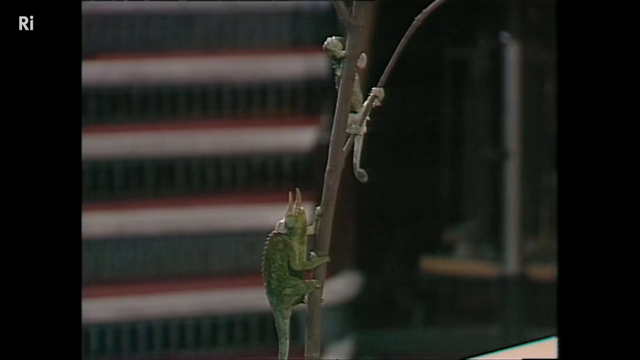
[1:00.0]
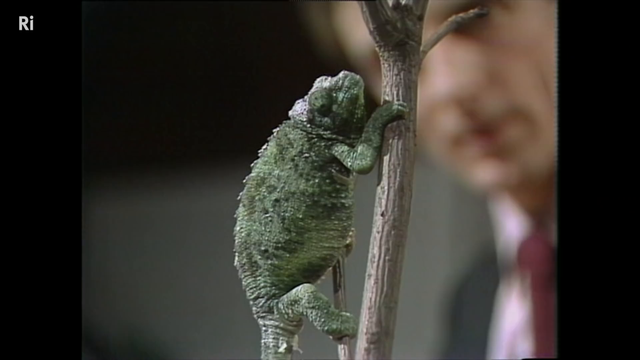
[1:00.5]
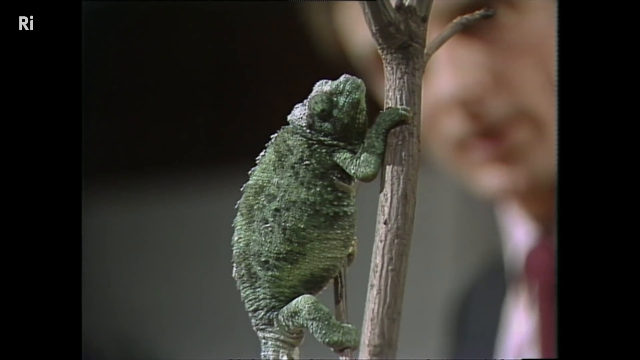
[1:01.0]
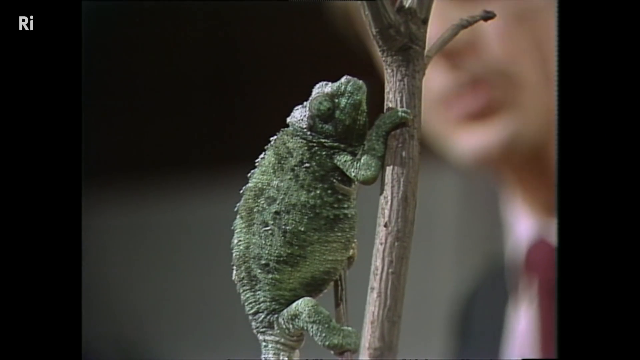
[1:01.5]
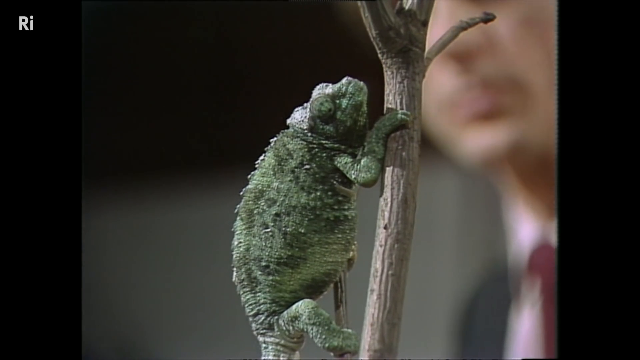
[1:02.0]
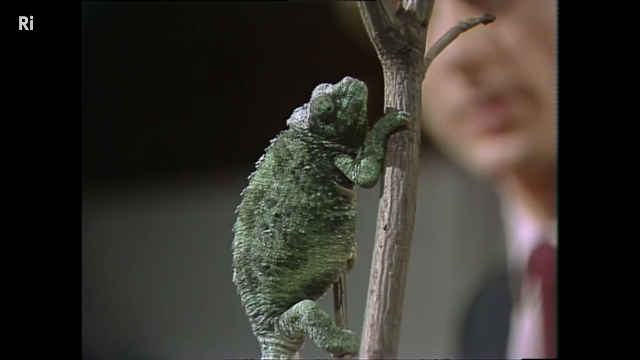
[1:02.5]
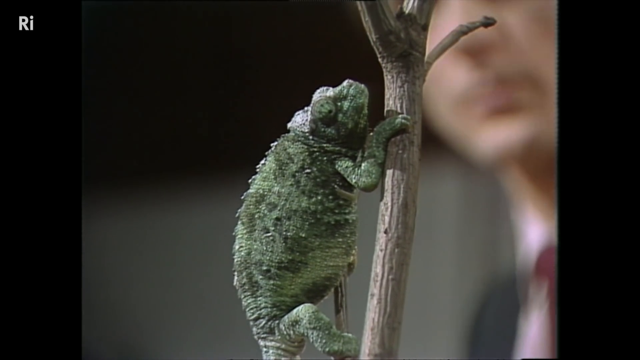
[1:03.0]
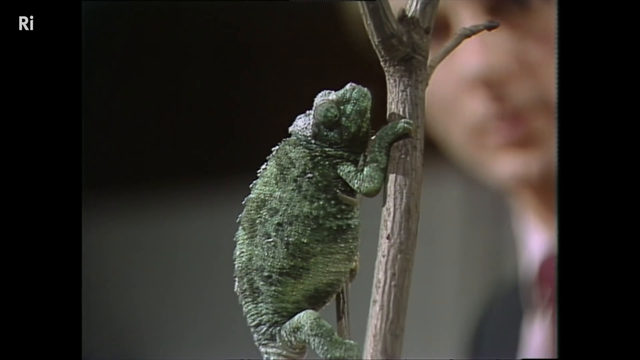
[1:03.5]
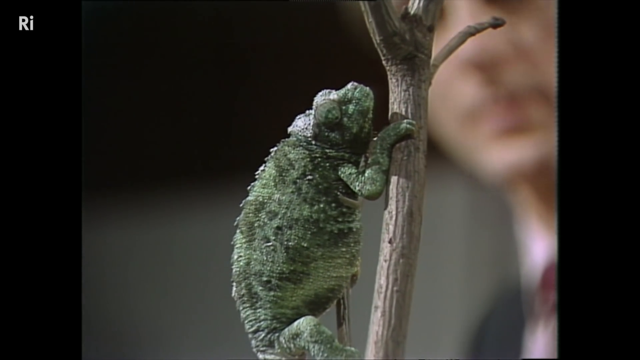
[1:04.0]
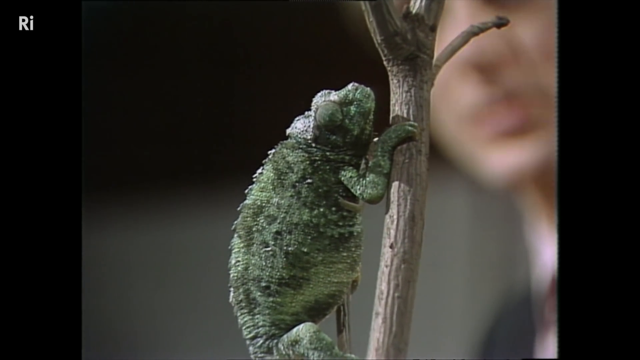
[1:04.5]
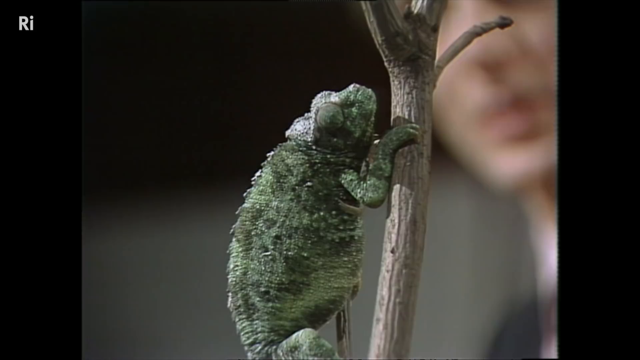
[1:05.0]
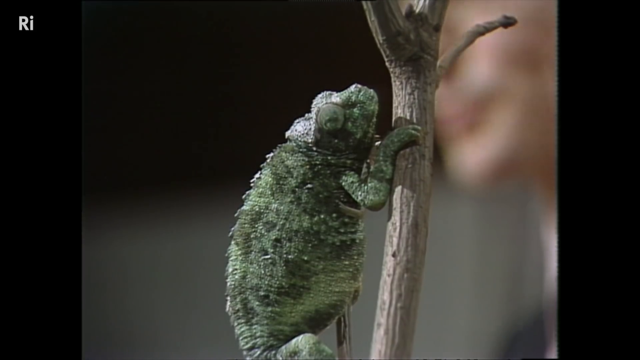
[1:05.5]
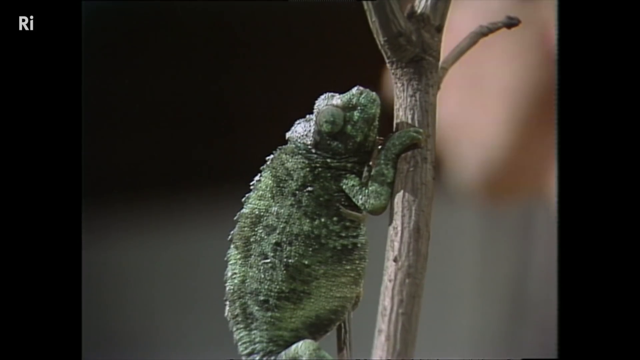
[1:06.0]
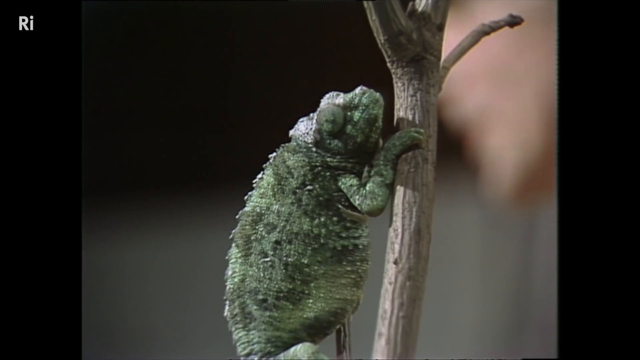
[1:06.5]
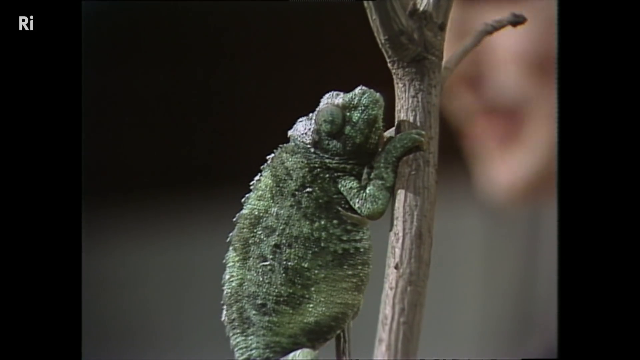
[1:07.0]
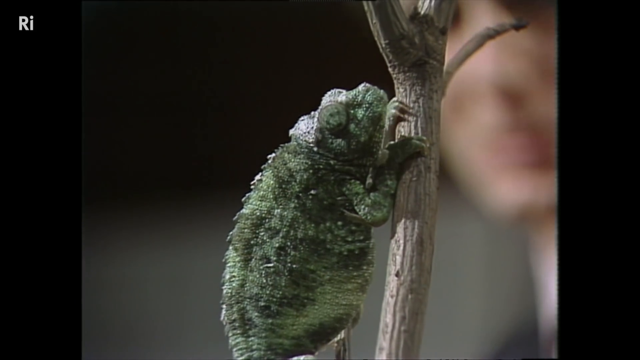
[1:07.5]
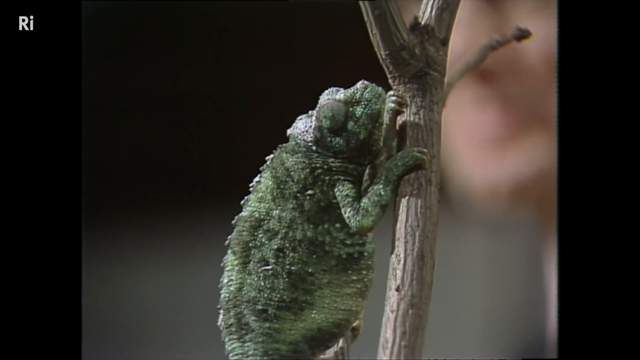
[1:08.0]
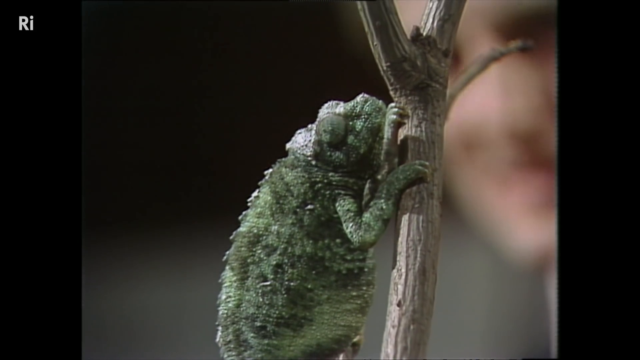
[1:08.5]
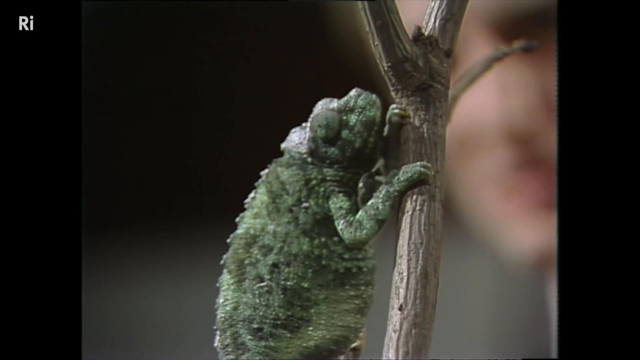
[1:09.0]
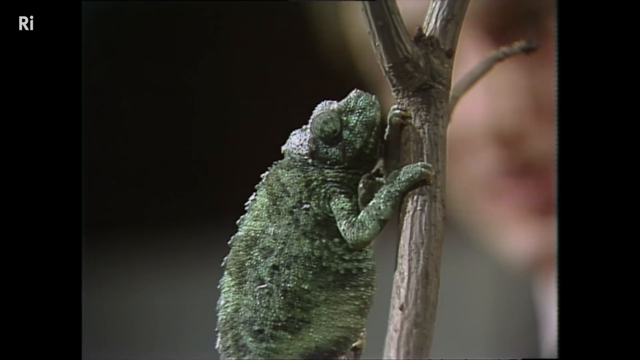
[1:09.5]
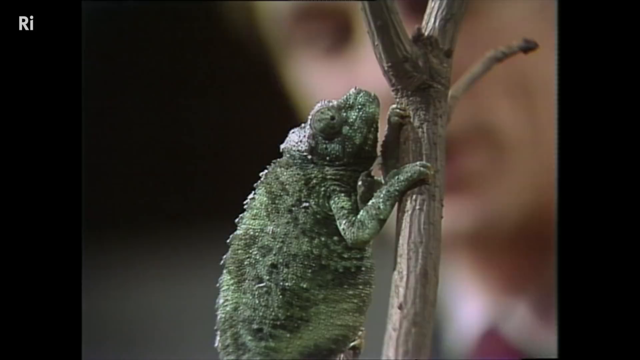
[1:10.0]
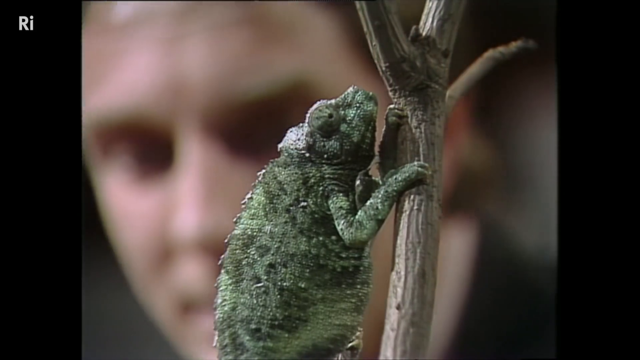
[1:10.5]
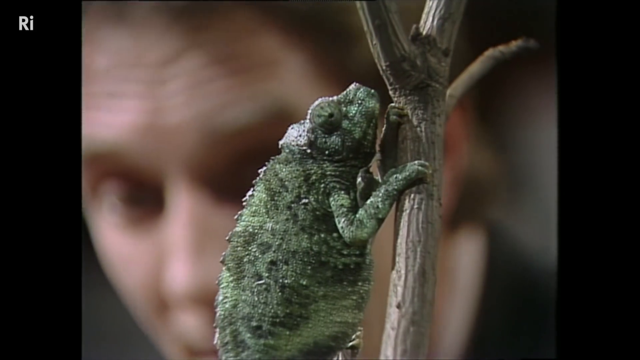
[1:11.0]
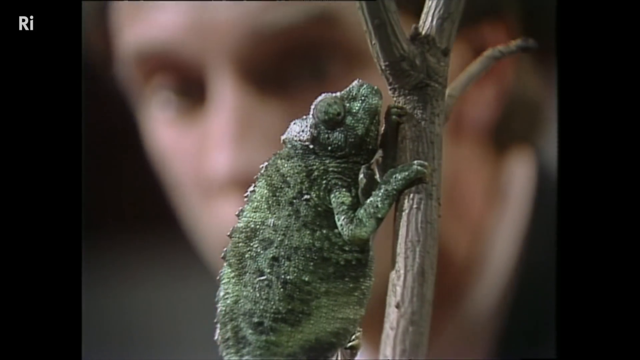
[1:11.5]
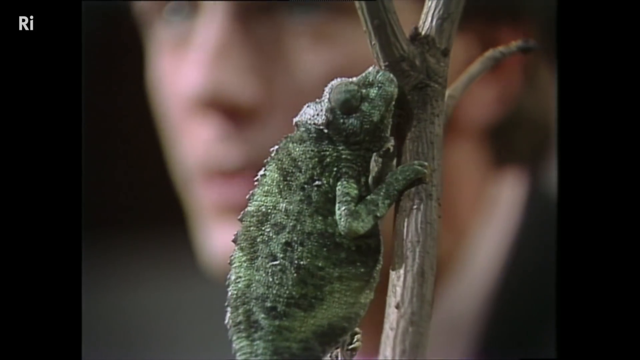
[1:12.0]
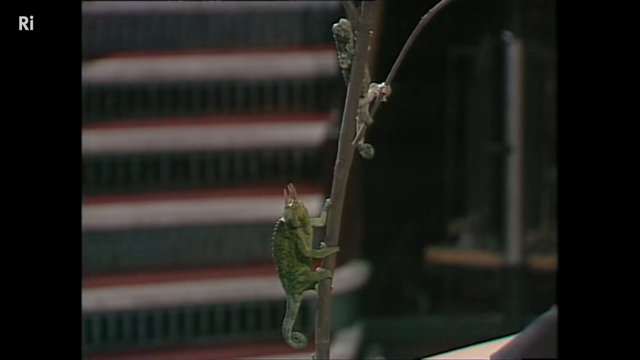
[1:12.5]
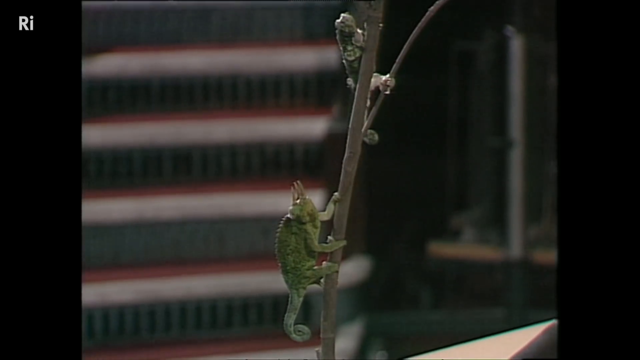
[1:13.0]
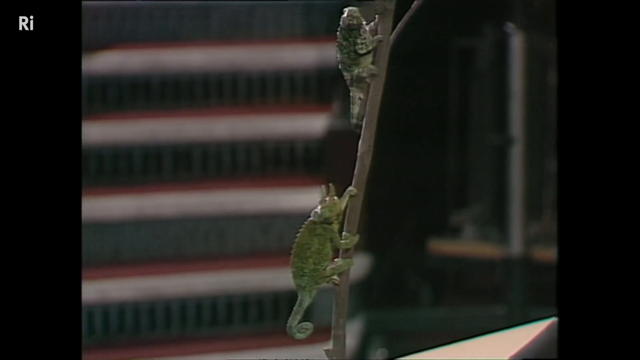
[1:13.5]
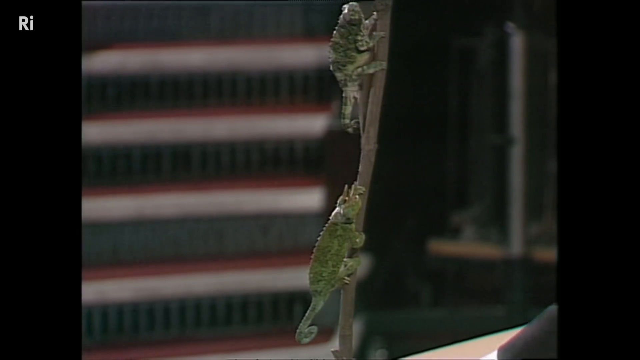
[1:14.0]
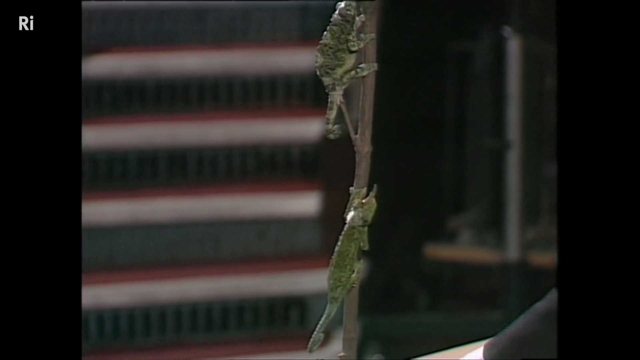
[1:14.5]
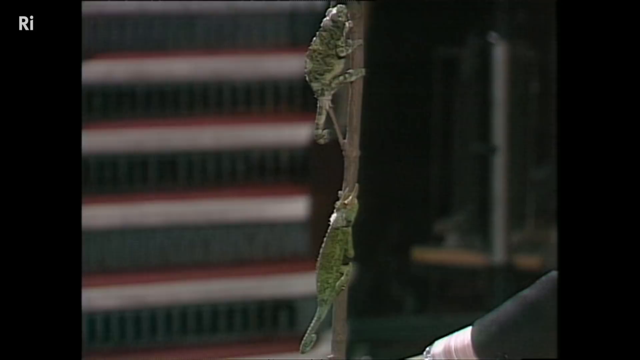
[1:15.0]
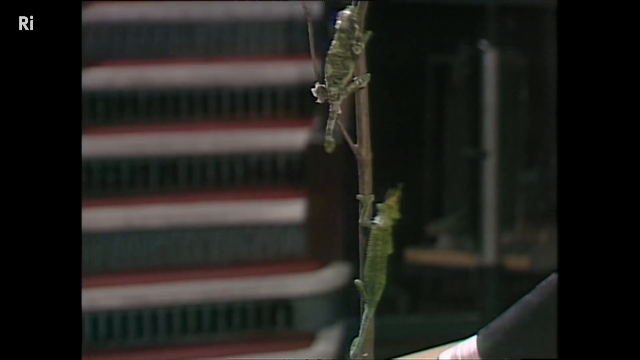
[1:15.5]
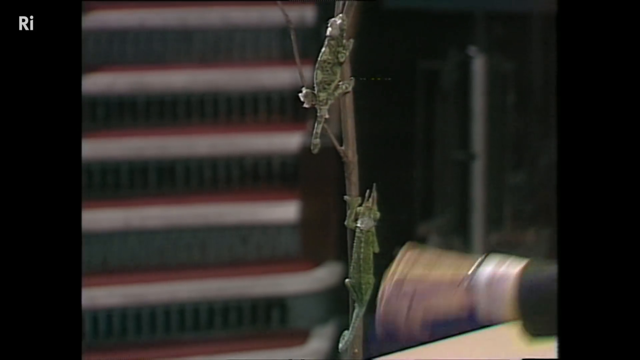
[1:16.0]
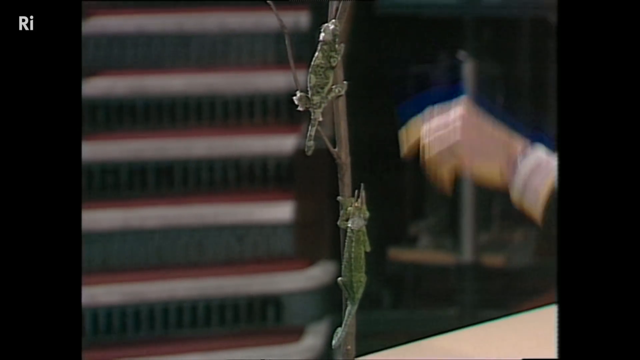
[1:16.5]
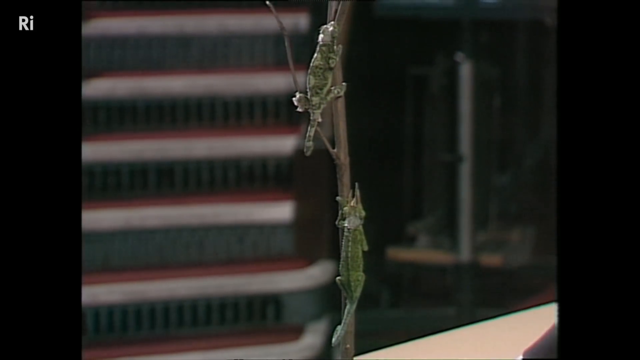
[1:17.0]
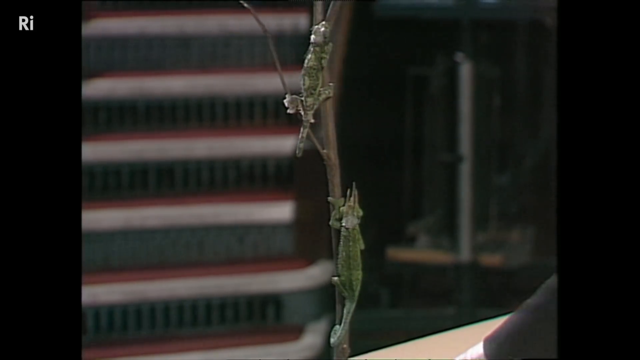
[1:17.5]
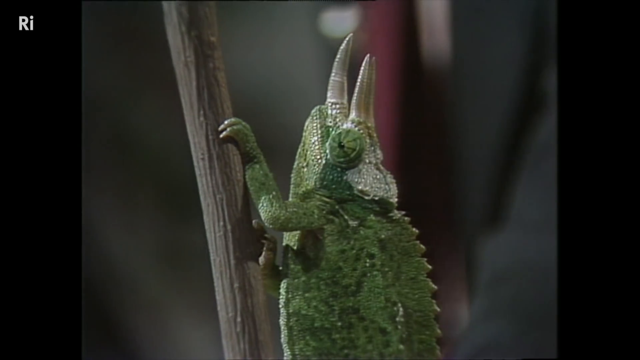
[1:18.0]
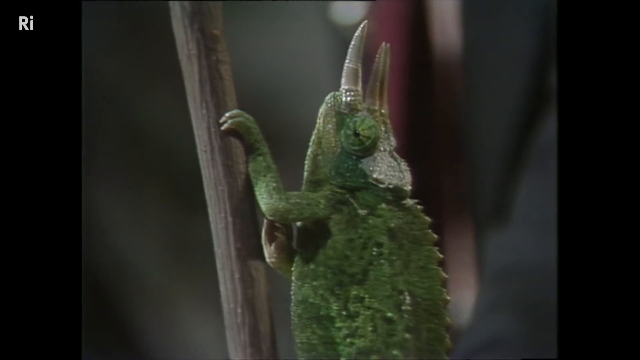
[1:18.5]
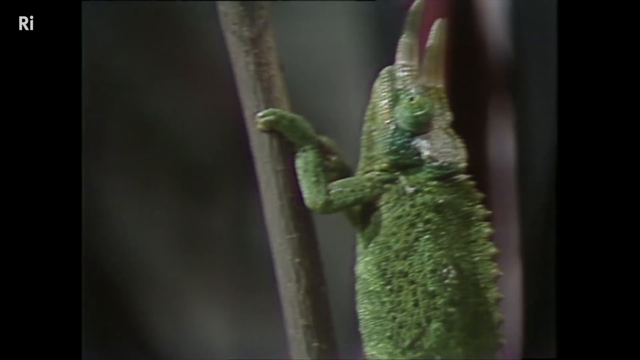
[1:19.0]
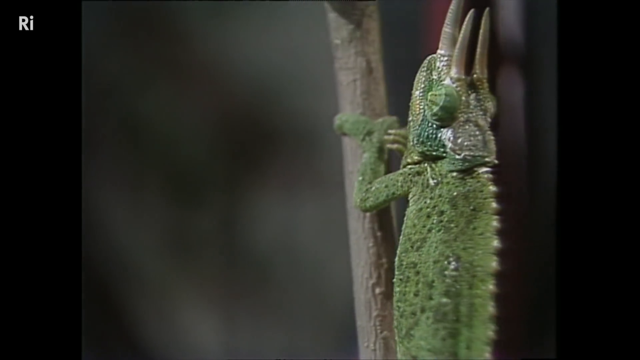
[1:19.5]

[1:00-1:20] A close-up shows two iguanas on a stick that is held upright, the background blurred to bring focus to them. The scene transitions to a close-up of an iguana sitting on the stick seen previously. In the blurred background, the man is speaking, the upper portion of his neck and head partially visible. The camera continues to pan in slowly and focuses on the iguana while the background stays blurred and the man moves around in the background. The scene then transitions to two of the iguanas on a stick again, the stick being rotated by the man in the suit.